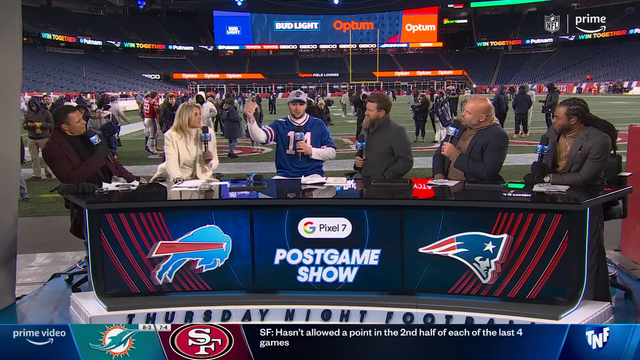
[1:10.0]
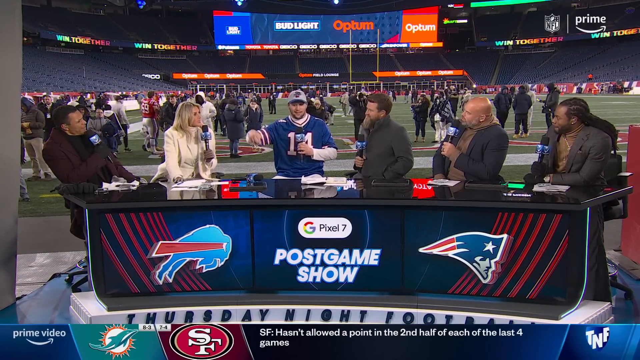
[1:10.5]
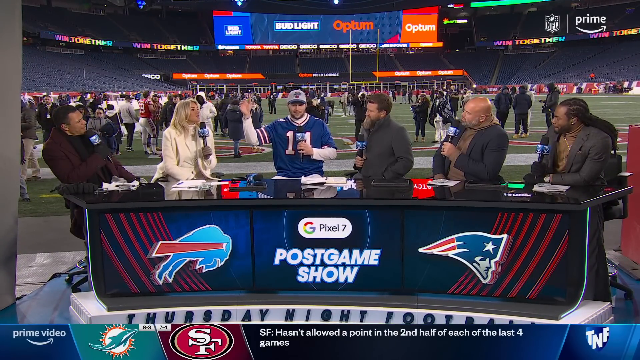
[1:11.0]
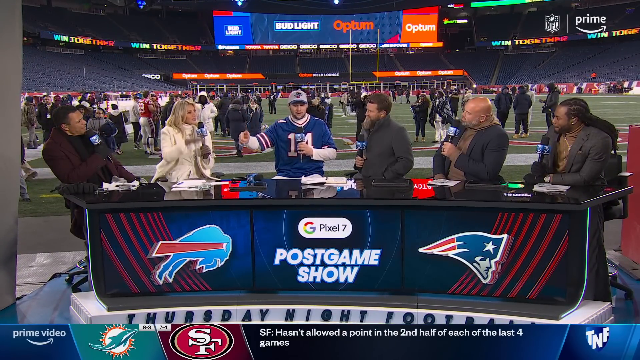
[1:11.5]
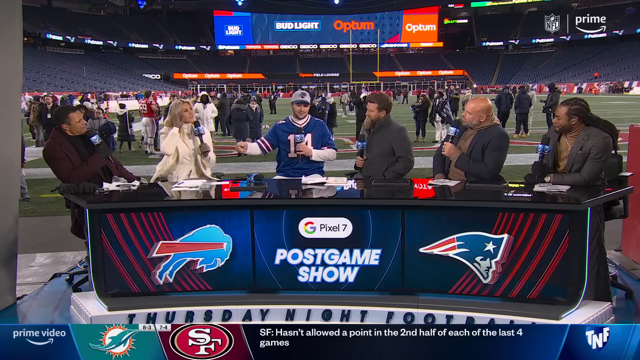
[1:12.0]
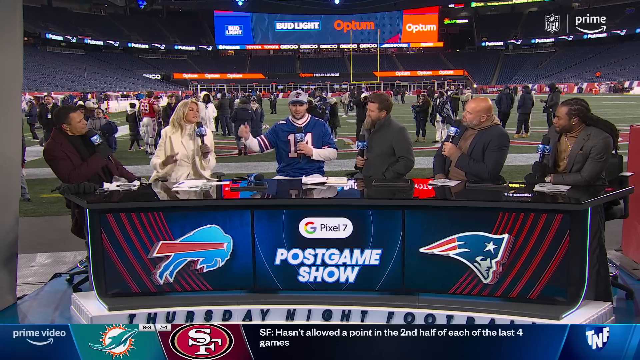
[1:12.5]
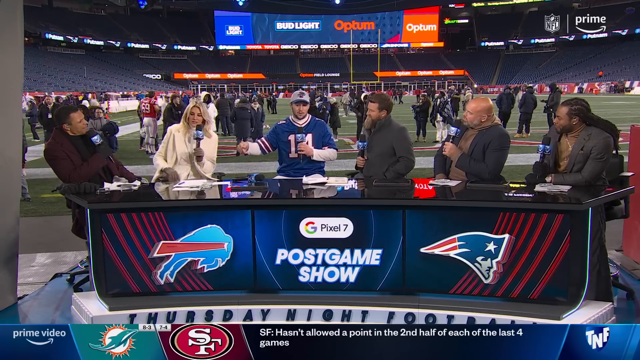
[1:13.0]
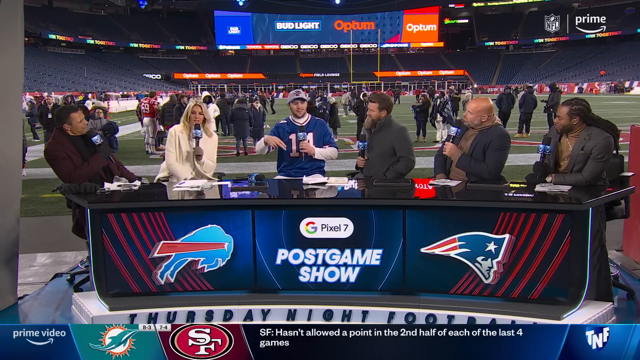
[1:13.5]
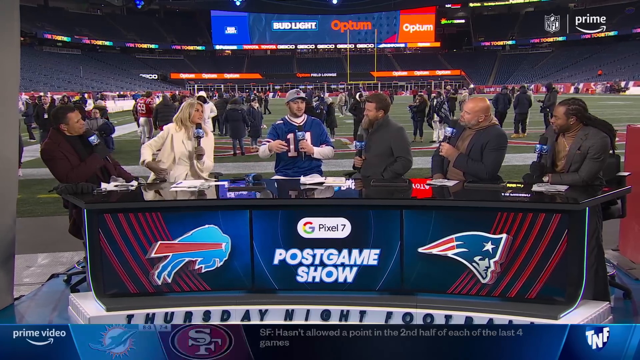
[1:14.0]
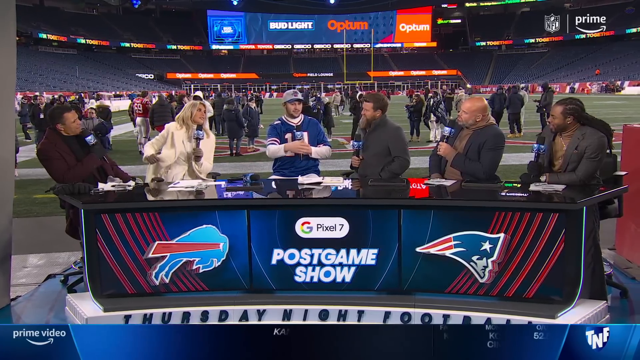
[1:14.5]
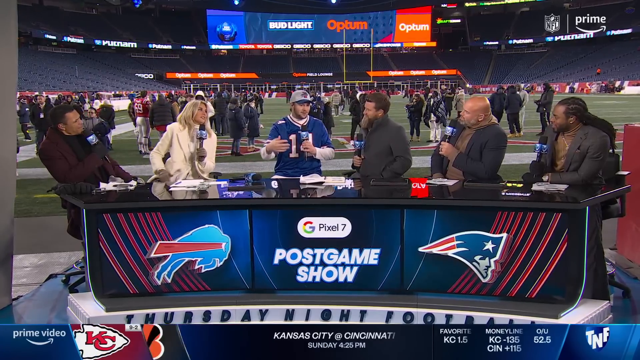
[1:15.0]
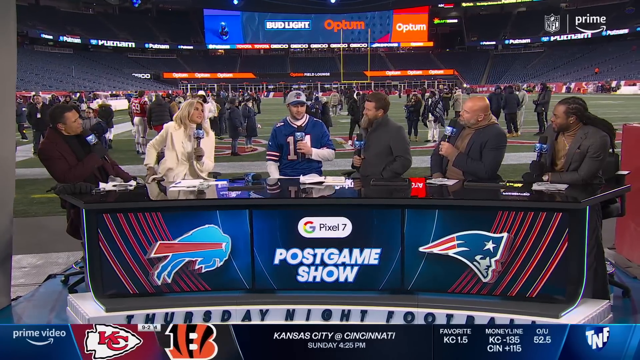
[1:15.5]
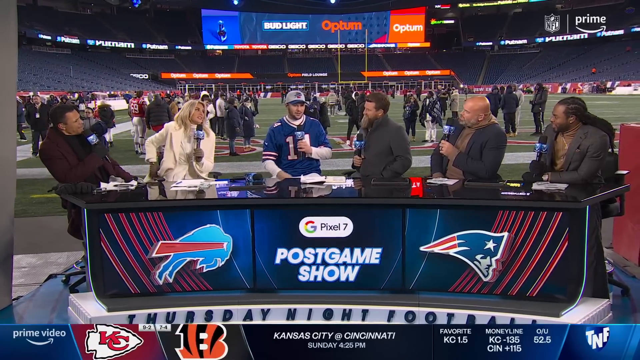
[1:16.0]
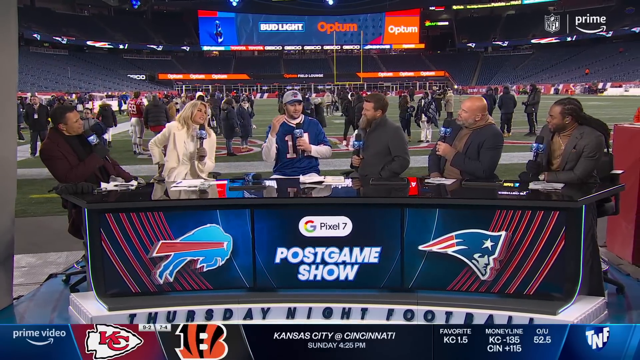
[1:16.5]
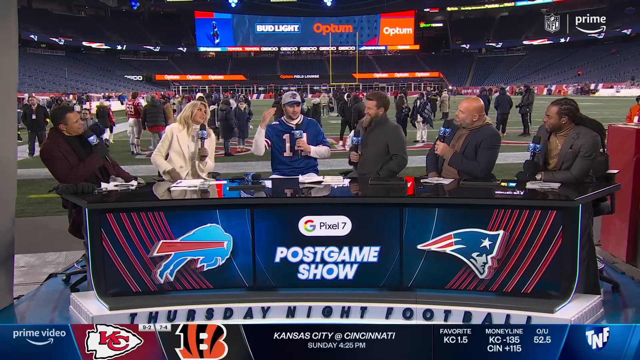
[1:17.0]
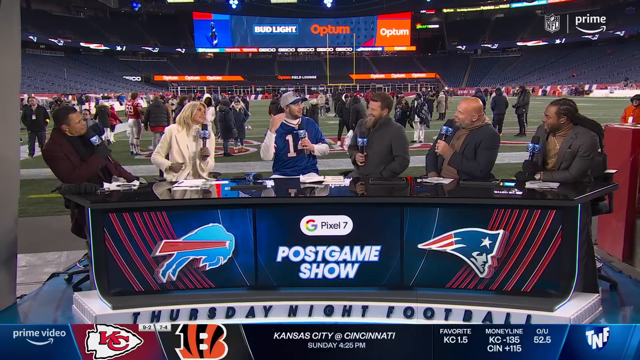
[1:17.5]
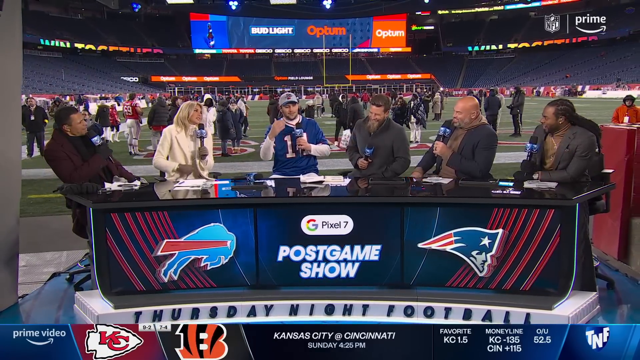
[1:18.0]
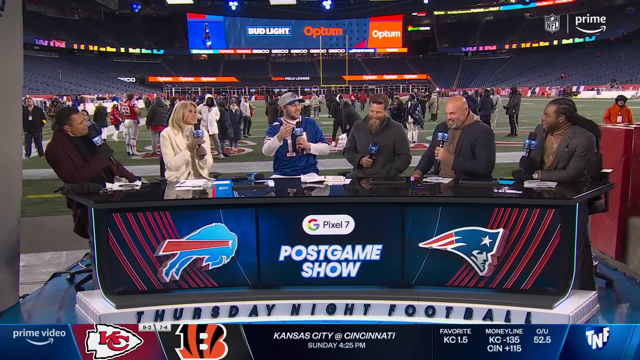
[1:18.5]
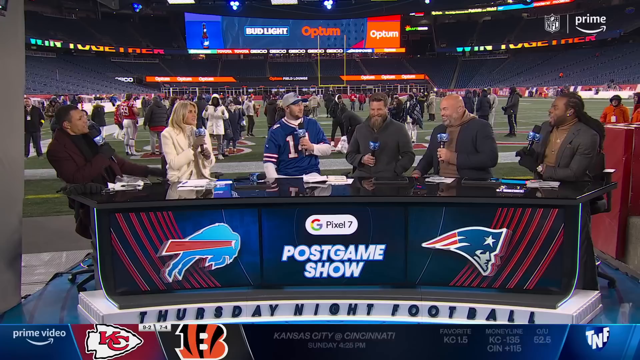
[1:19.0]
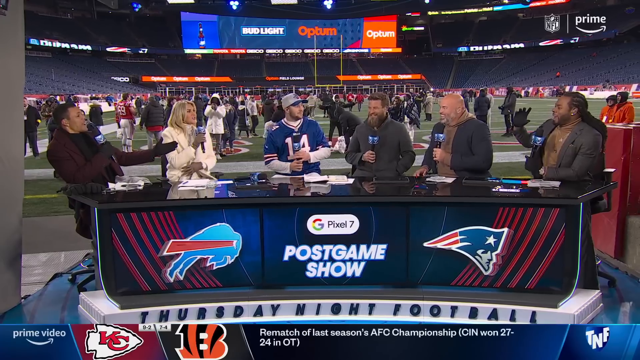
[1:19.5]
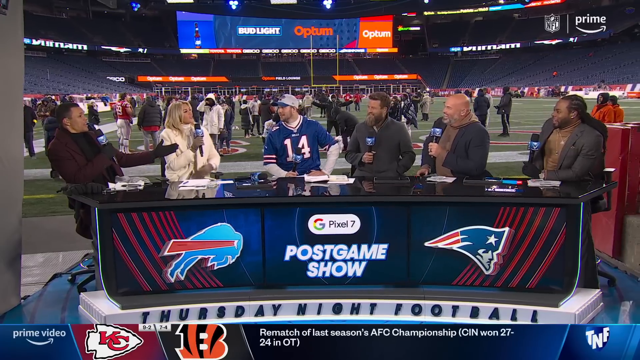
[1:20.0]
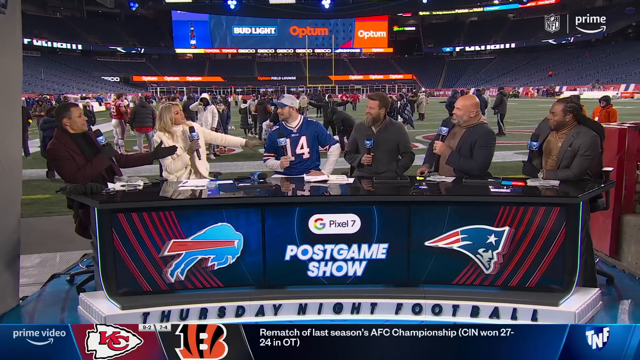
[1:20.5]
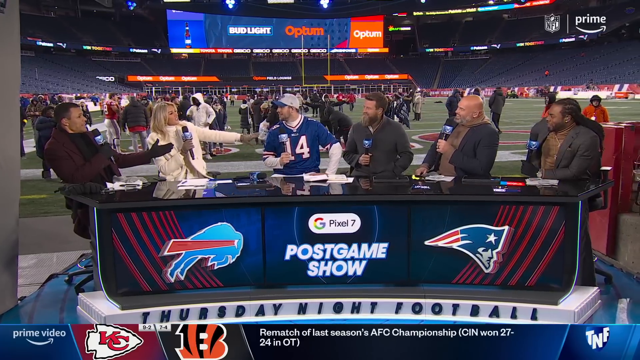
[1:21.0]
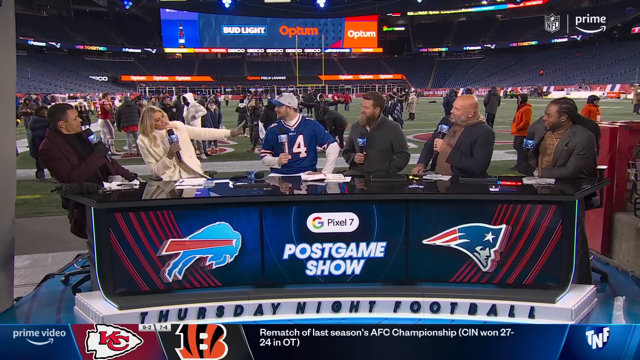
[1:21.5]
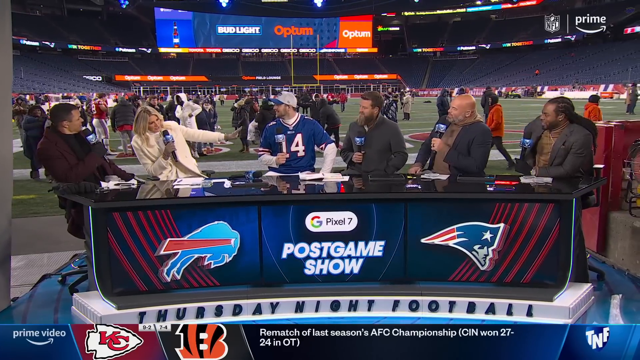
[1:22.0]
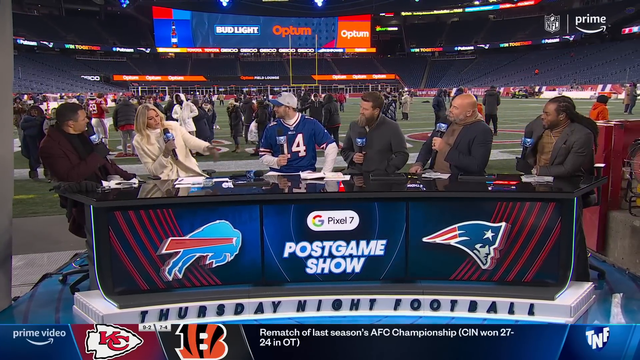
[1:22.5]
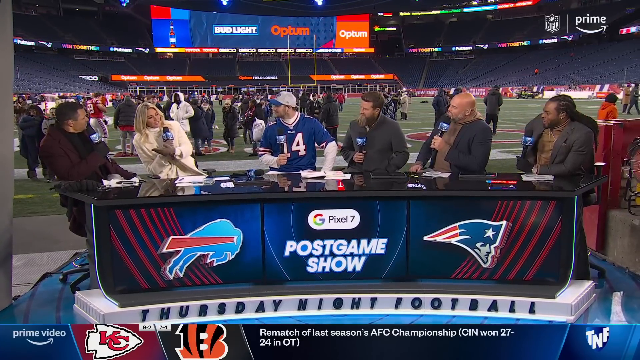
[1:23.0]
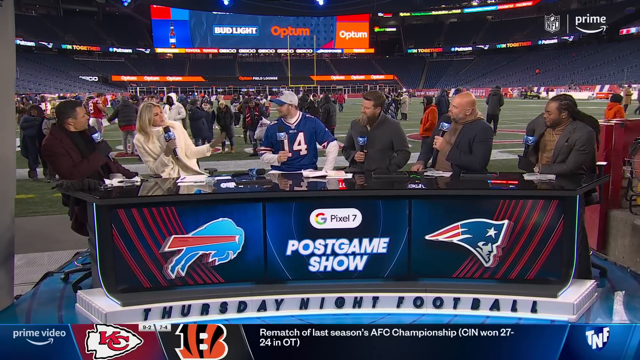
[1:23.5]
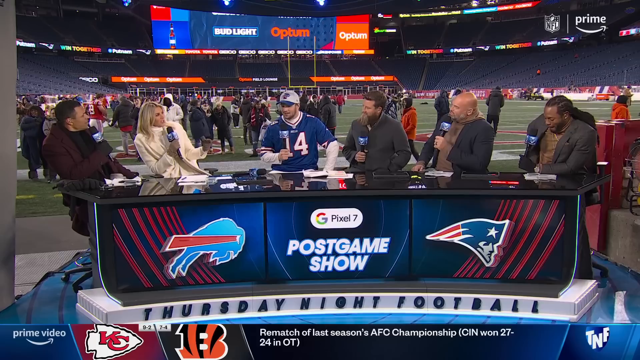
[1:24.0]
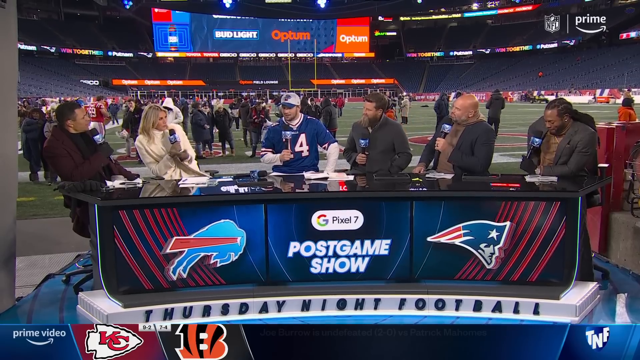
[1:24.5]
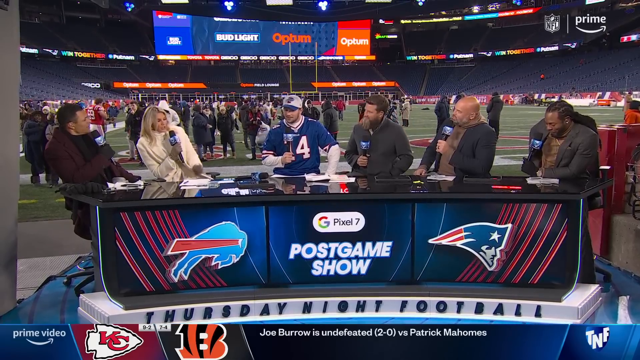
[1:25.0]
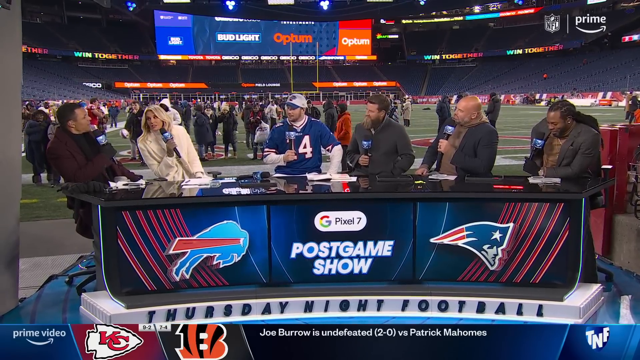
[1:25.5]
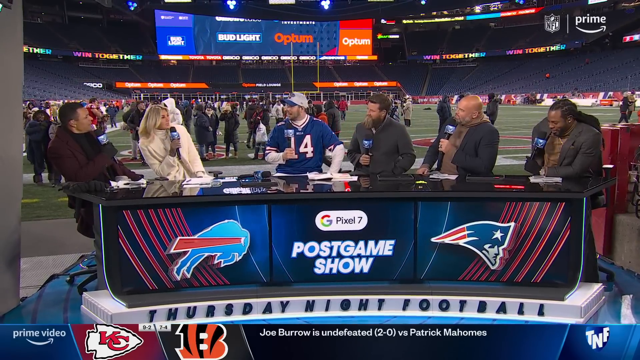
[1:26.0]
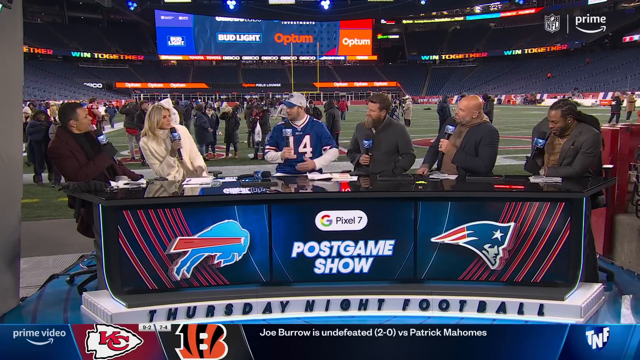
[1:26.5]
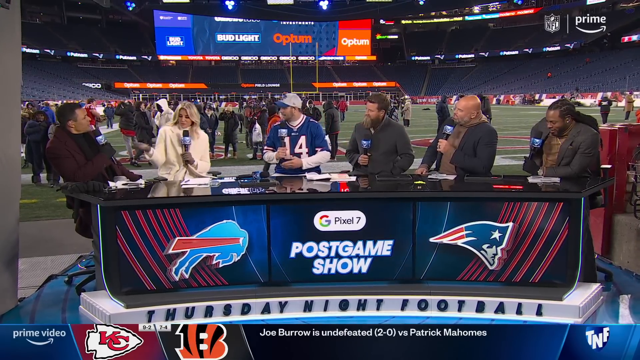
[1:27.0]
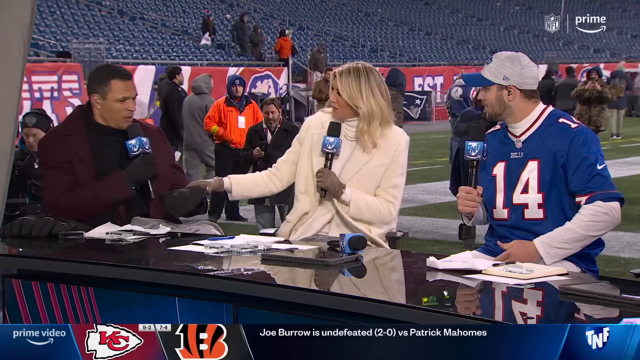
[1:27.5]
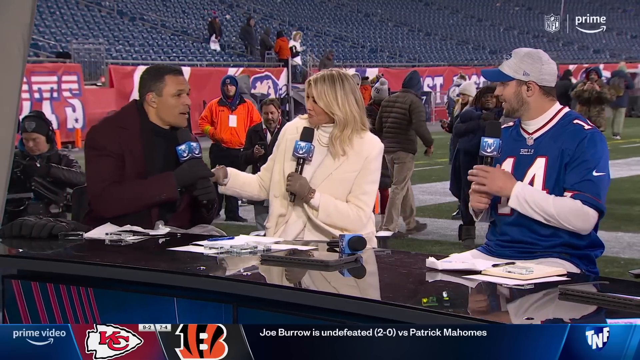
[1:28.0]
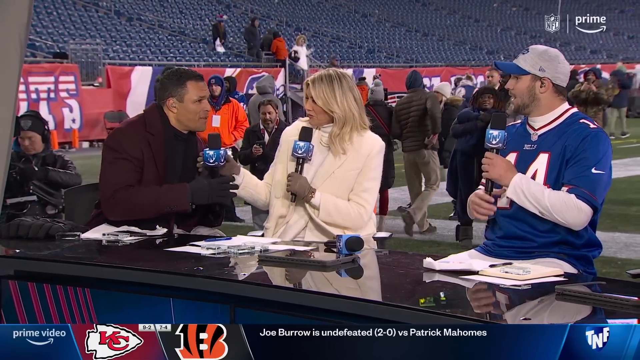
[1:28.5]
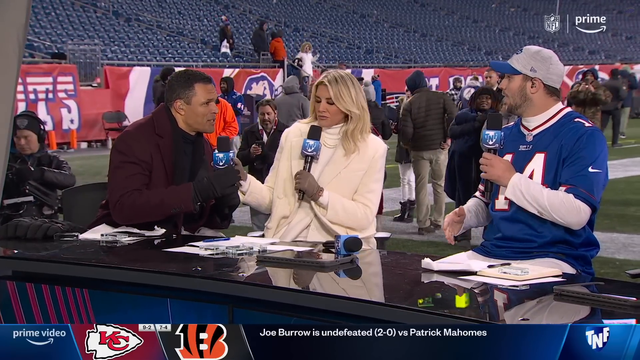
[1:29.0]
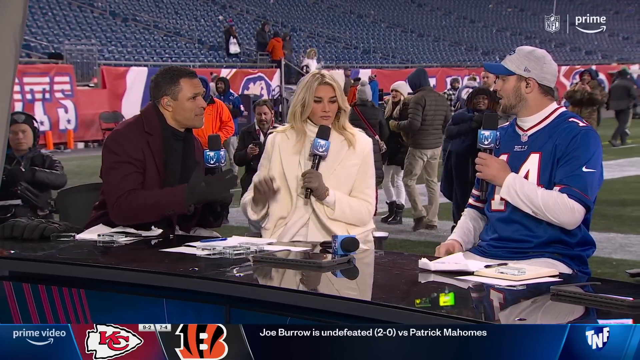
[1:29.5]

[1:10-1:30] The player wearing the number 14 jersey sits in the middle of the interviewers at the post-game show desk, which is set up right in the middle of the stadium. The stadium is empty, as most of the fans have left, but a few fans, or possibly friends and family members of the team, walk down the stadium steps toward the field. The player looks to his right at the man in the burgundy overcoat and the blonde woman in the beige or off-white overcoat, speaking into the microphone and looking directly at them. In the background off to the left, a stadium security guard in a black winter hat, black overcoat and glasses watches the interview with his arms folded over his chest.